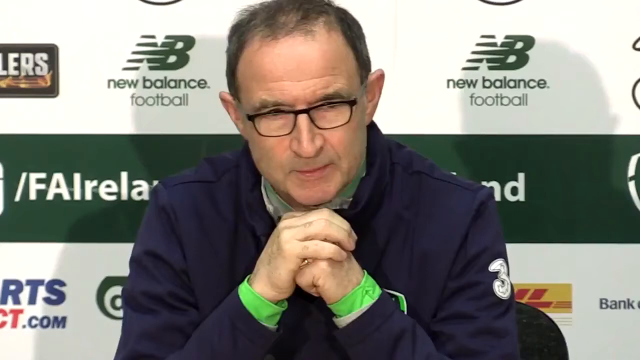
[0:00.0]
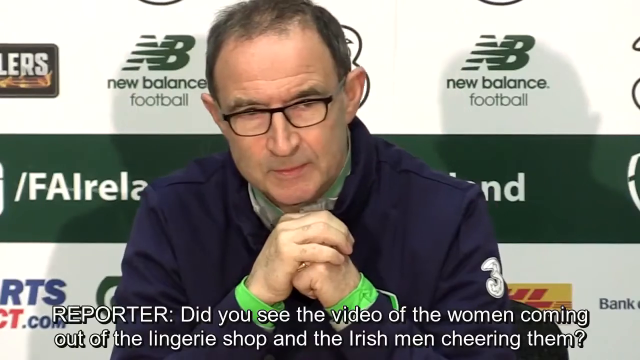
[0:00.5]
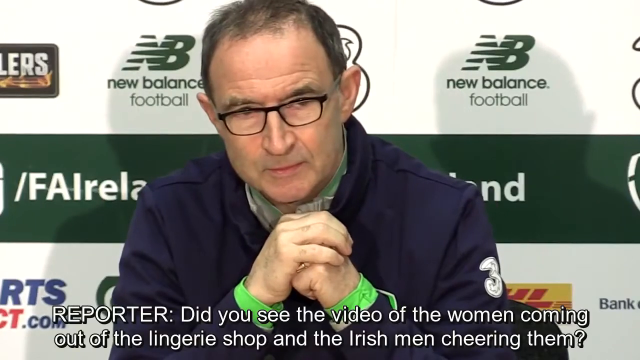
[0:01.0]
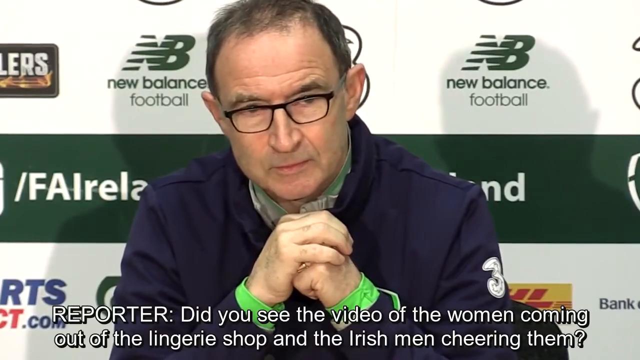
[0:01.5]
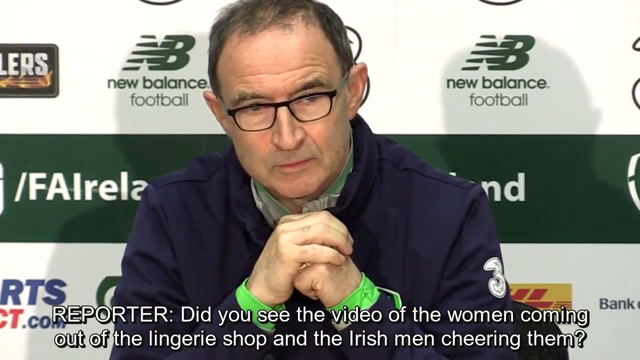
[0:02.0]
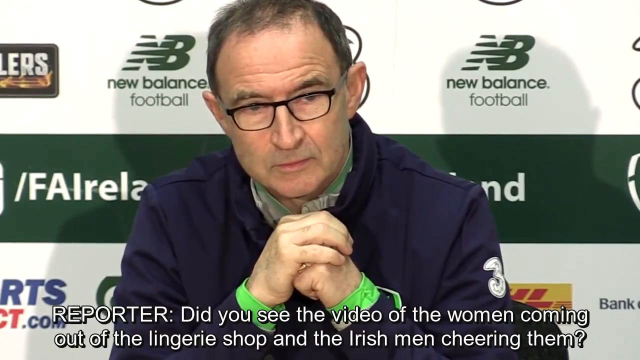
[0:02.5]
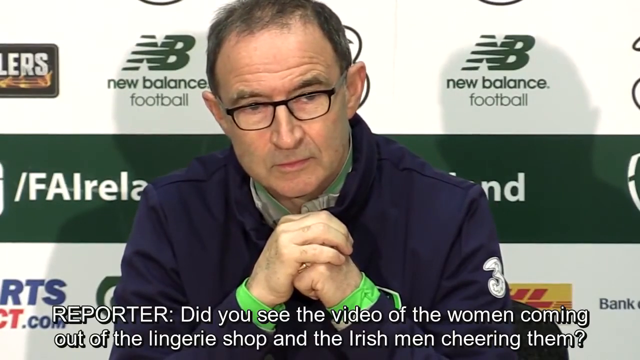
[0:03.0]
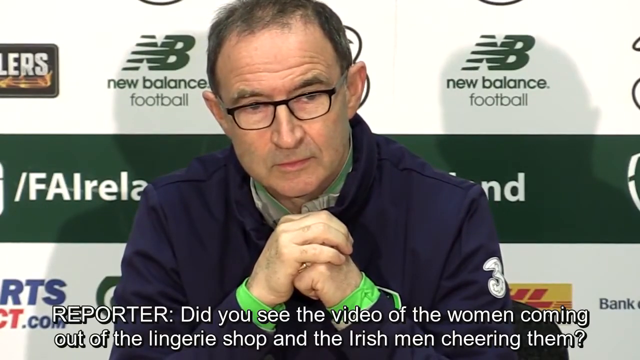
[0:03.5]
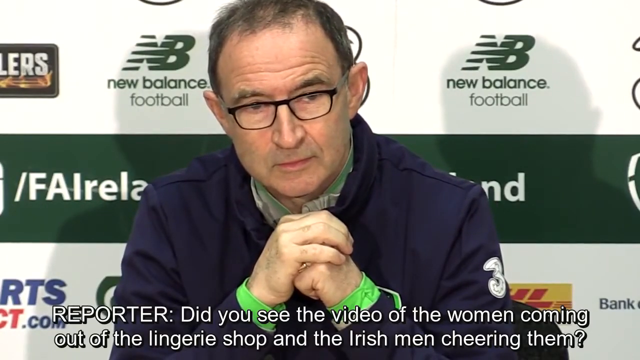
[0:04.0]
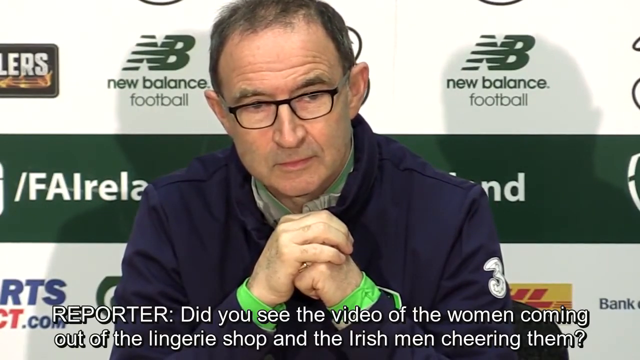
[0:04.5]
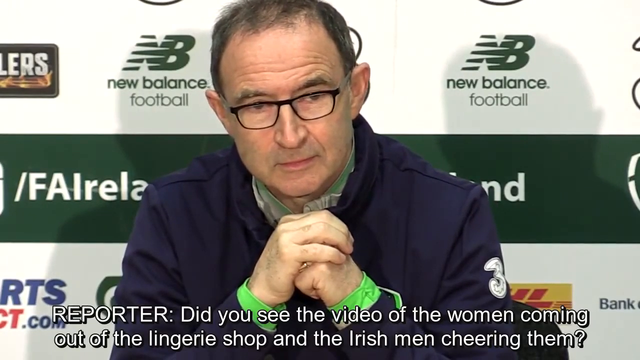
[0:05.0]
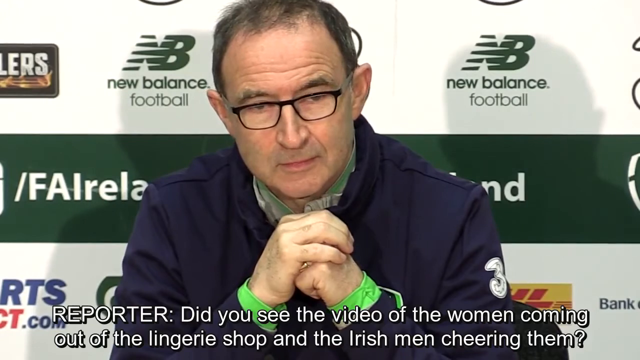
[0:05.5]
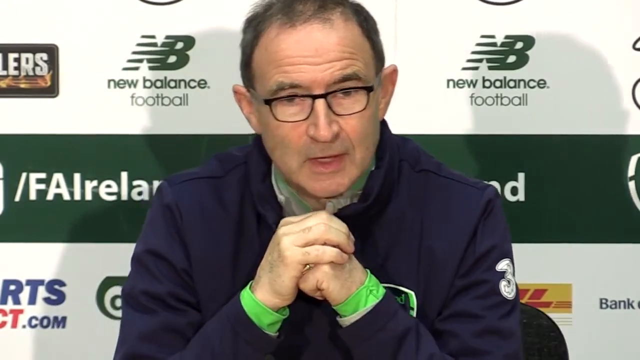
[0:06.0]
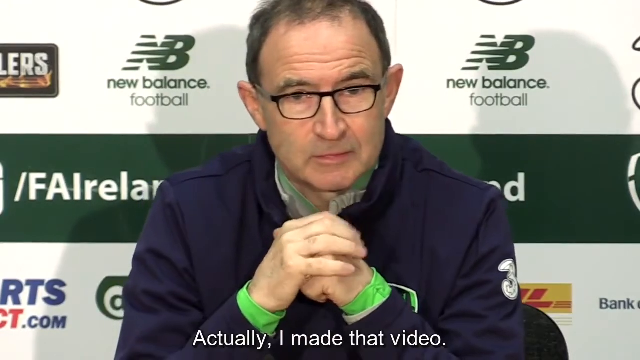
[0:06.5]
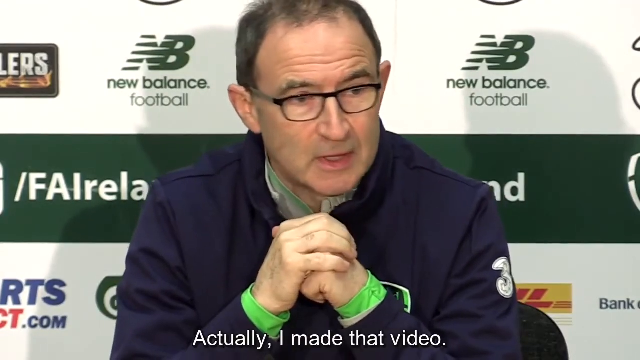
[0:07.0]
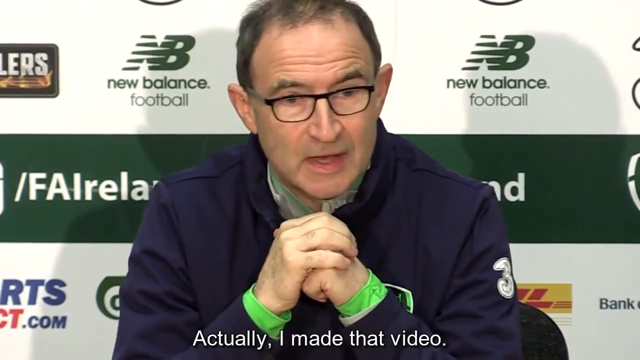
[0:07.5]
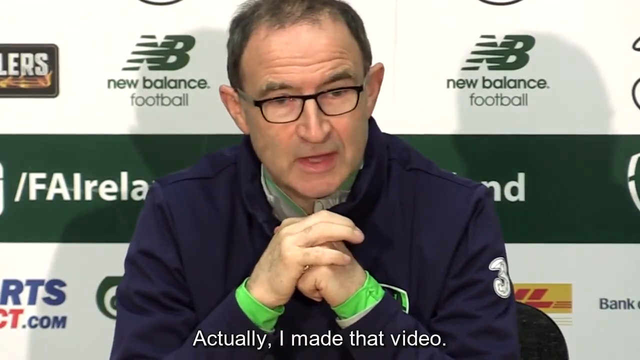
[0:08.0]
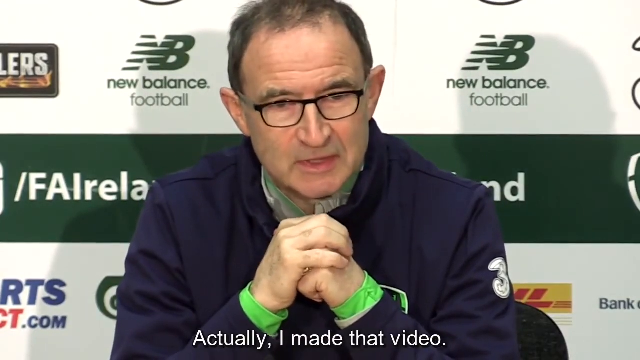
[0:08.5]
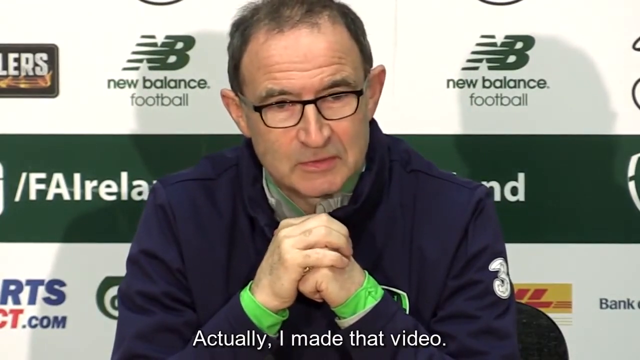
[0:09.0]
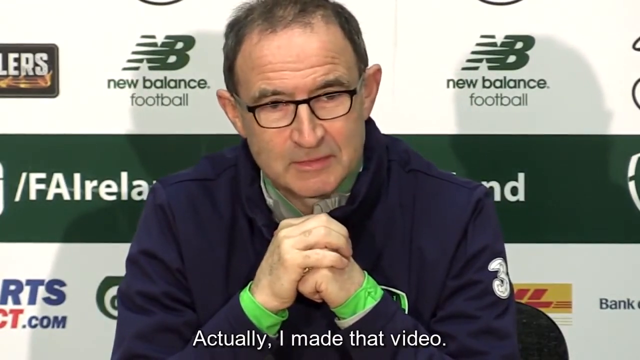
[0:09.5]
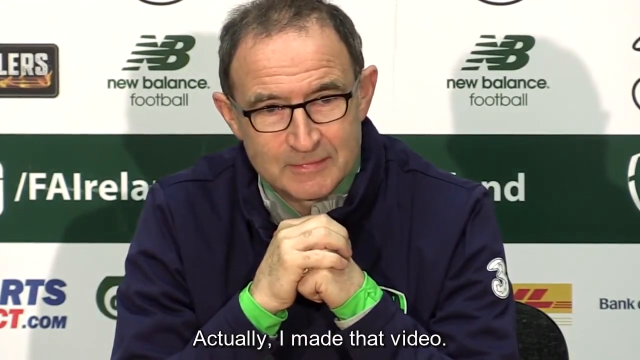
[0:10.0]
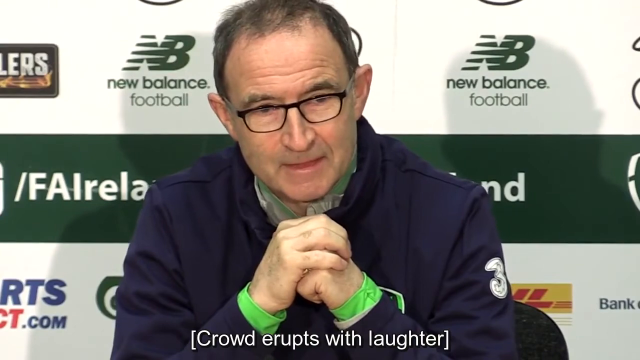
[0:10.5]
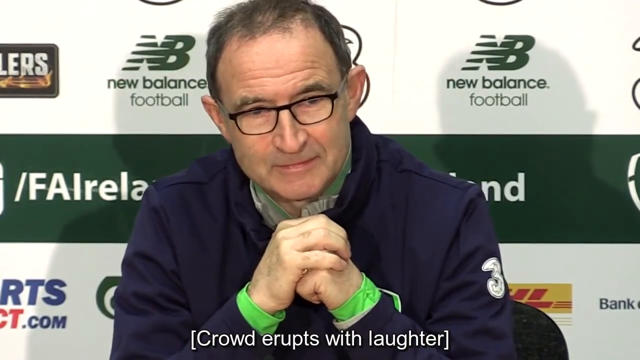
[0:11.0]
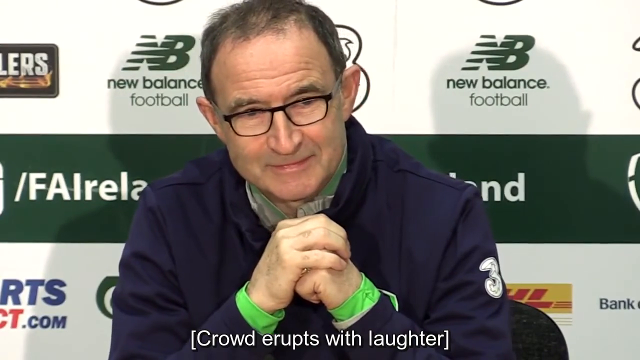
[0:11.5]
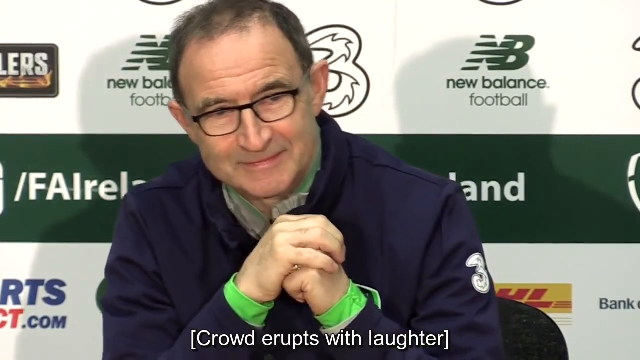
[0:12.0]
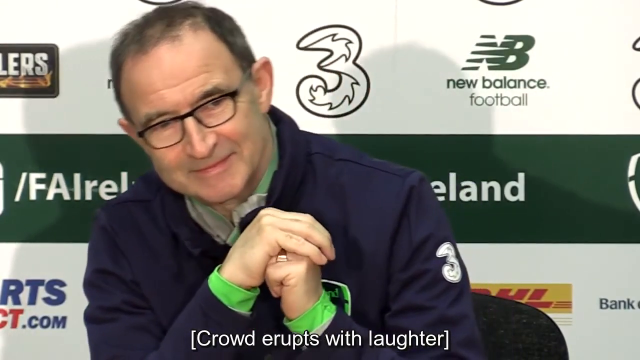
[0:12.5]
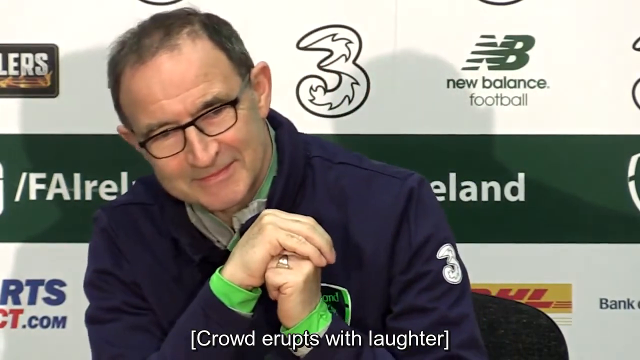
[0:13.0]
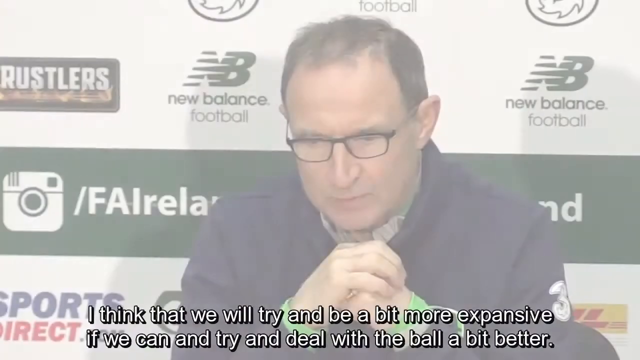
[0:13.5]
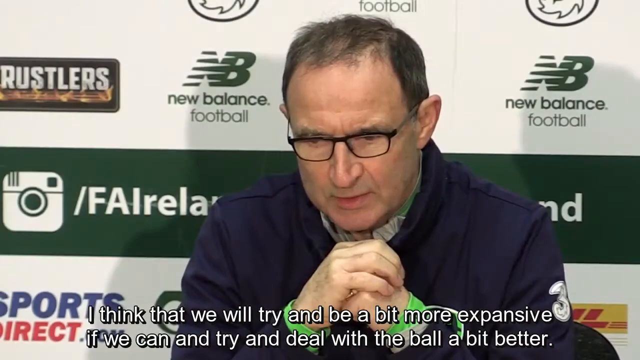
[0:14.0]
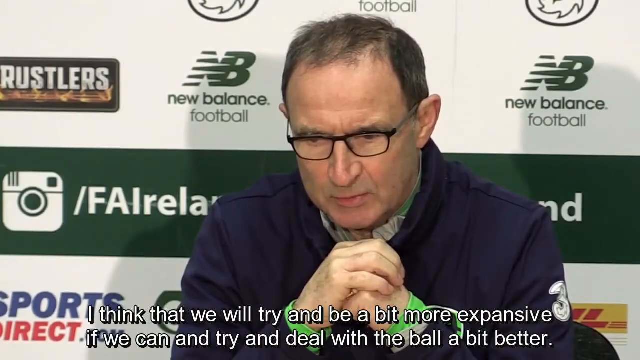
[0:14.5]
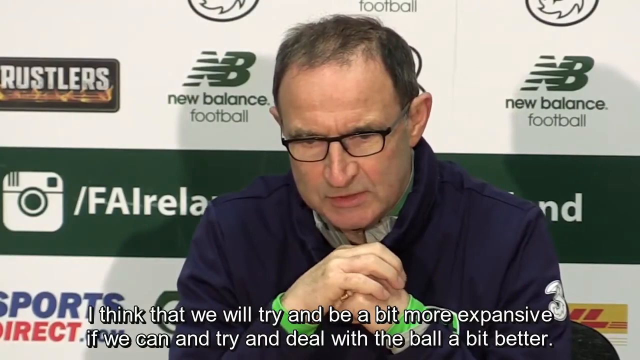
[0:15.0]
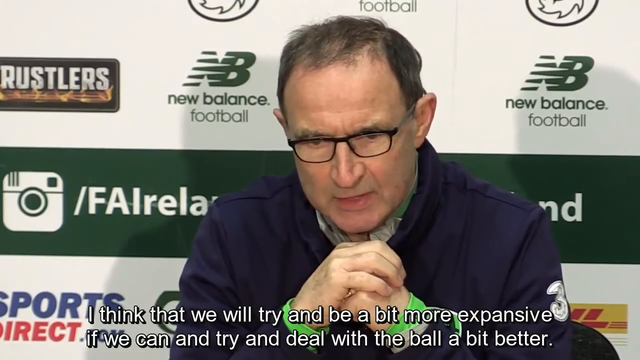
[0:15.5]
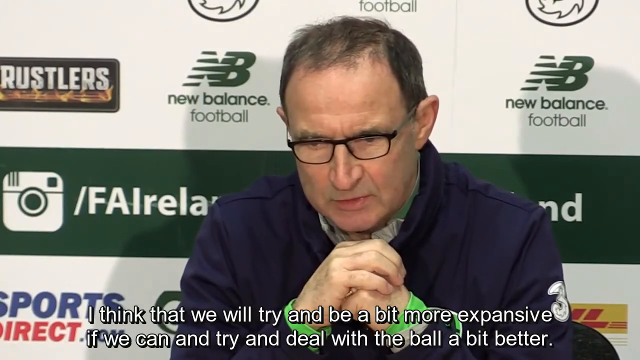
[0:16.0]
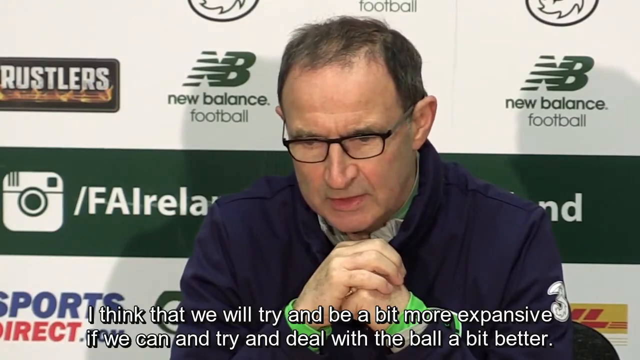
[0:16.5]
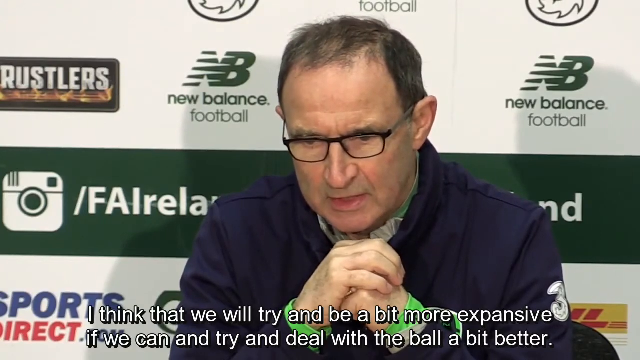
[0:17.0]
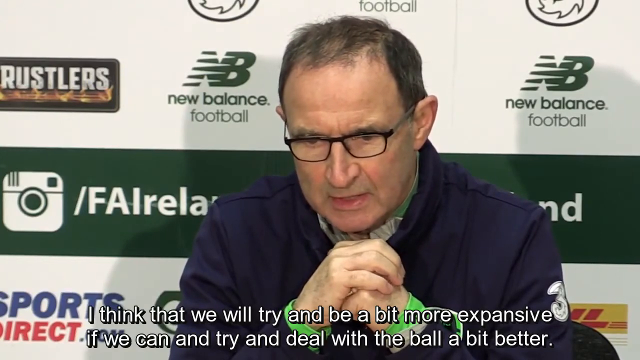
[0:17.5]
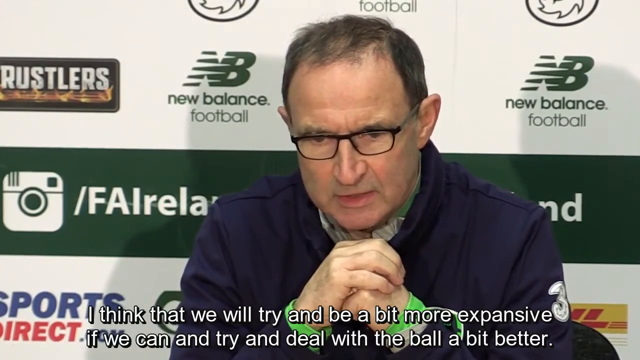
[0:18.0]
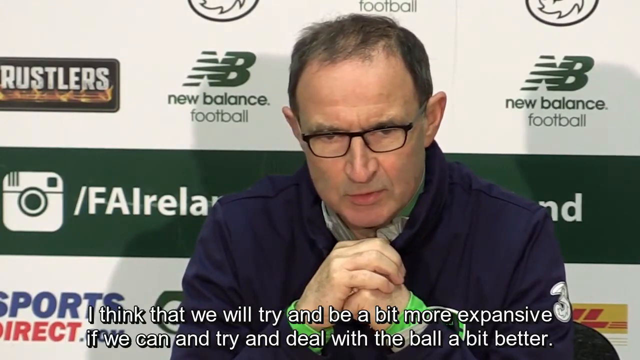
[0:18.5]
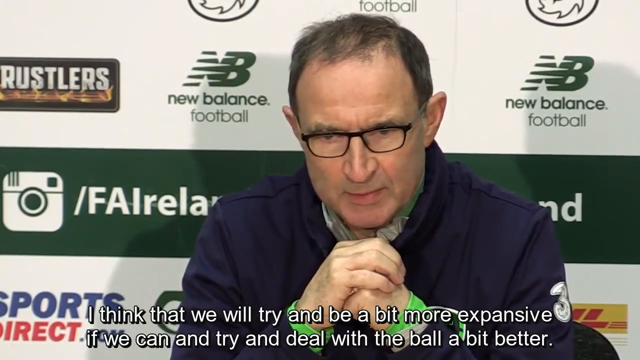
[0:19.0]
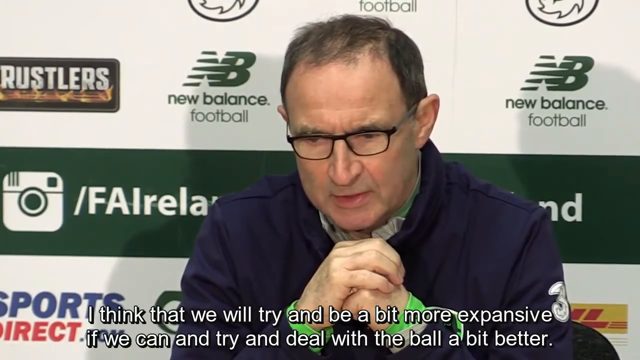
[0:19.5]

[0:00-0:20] A white man with short hair, no facial hair and glasses sits in a chair with his hands touching together. He has a ring on, and he wears a blue shirt with what looks like green cuffs over a white undershirt. Various advertisements are in the background, the most prominent being New Balance. Reporters are asking him questions; he listens intently and responds to the interviewers, and people are laughing. A caption at the bottom says "Reporter did you see the video of the women coming up out of the lingerie shop? the Irishmen cheering them." He replies, "actually, I made that video," and then the caption says "crowd erupts with laughter." He then says, "I think that we will try and be a bit more expansive if we can, and try to deal with the ball carrier a bit better."